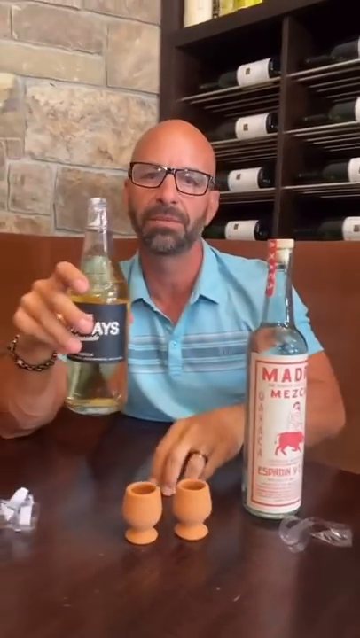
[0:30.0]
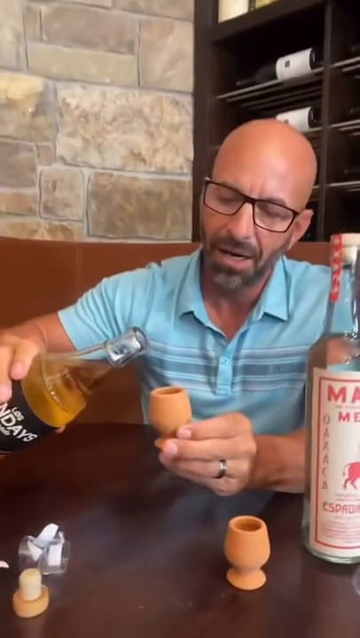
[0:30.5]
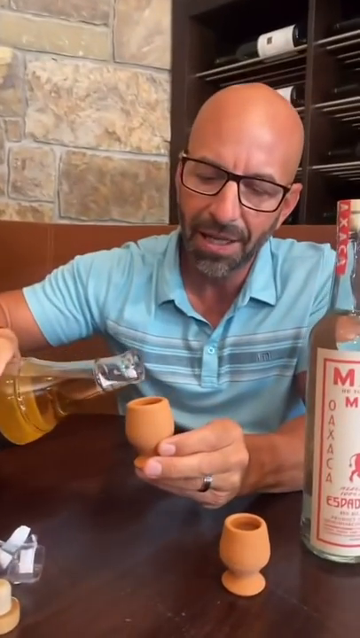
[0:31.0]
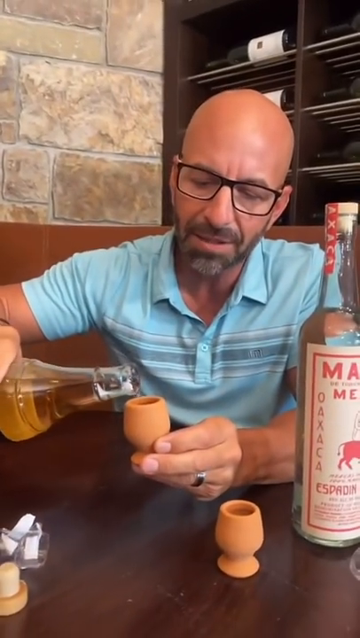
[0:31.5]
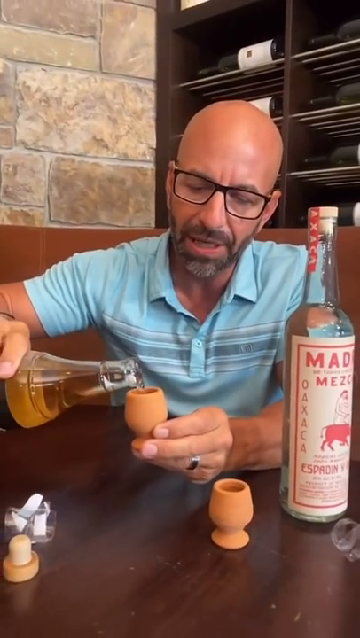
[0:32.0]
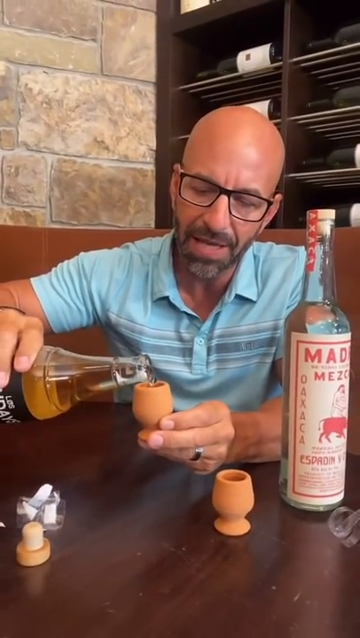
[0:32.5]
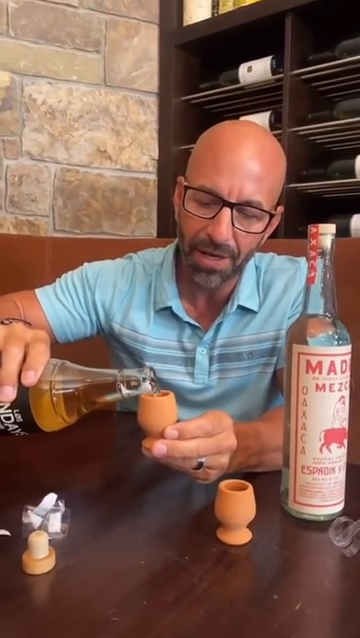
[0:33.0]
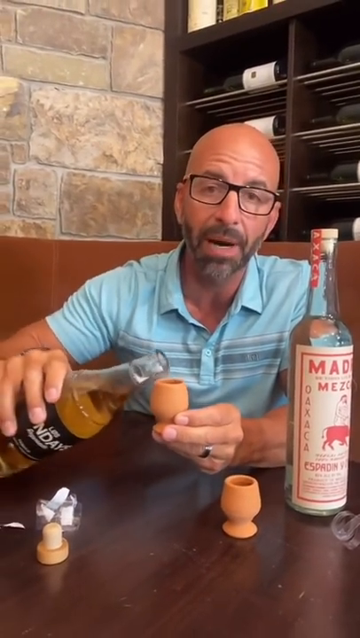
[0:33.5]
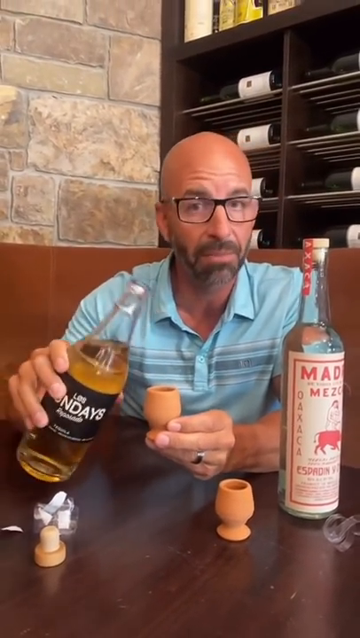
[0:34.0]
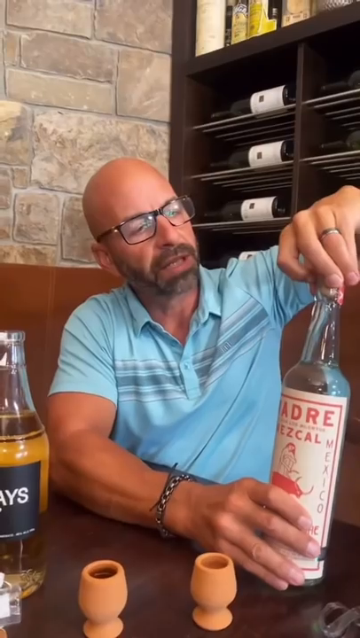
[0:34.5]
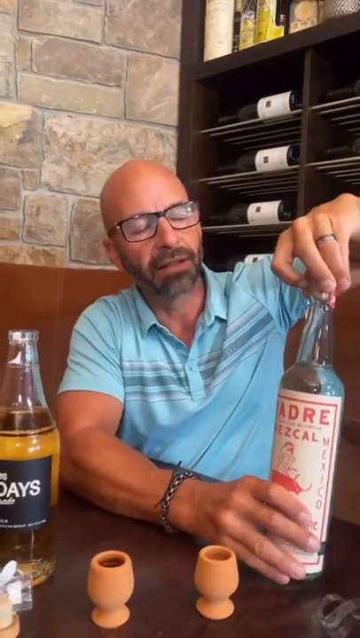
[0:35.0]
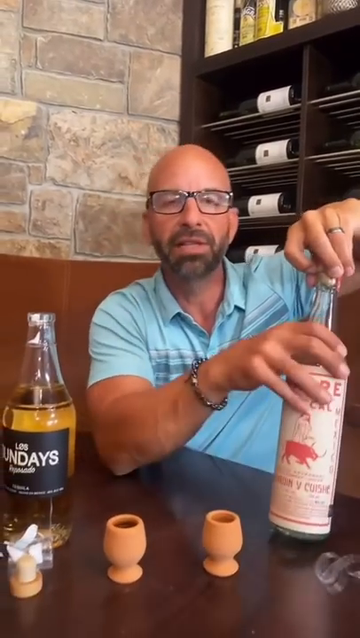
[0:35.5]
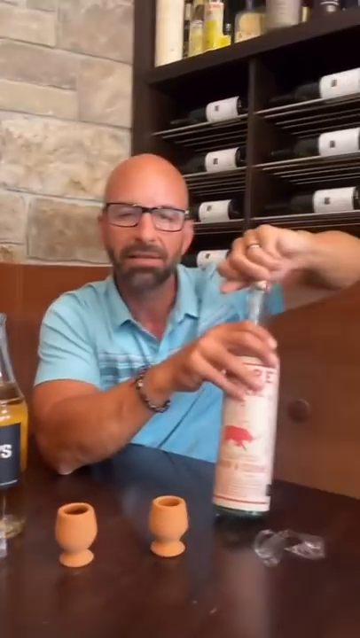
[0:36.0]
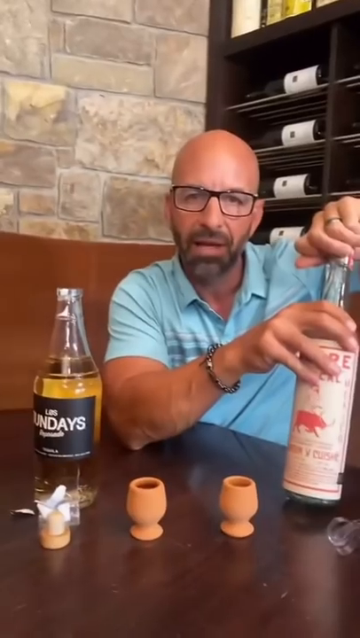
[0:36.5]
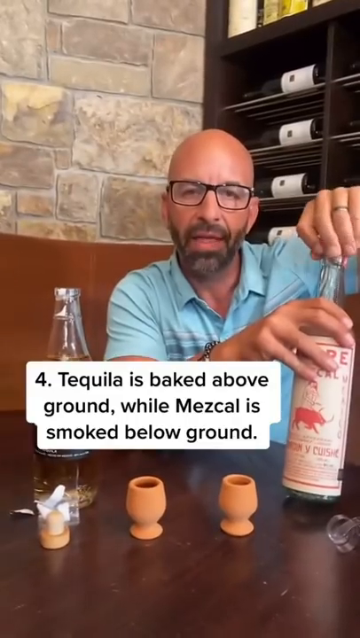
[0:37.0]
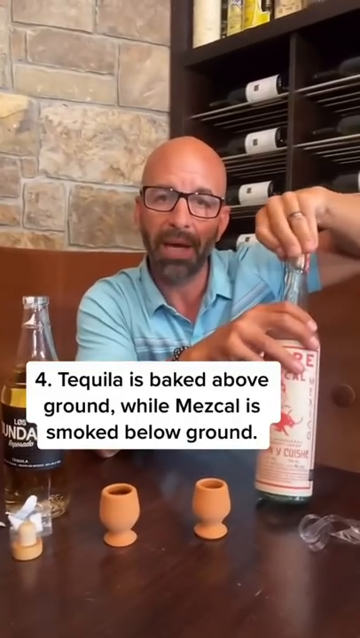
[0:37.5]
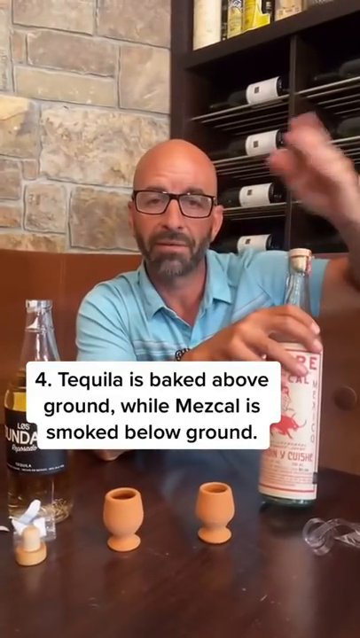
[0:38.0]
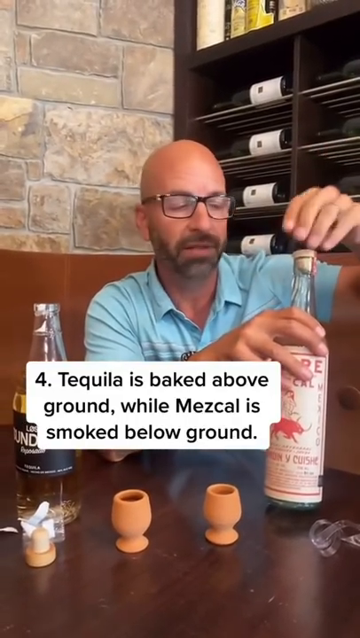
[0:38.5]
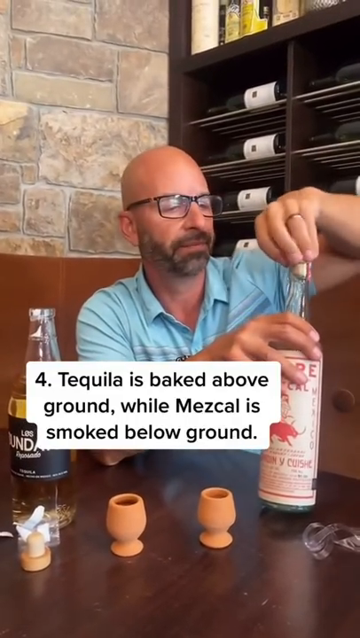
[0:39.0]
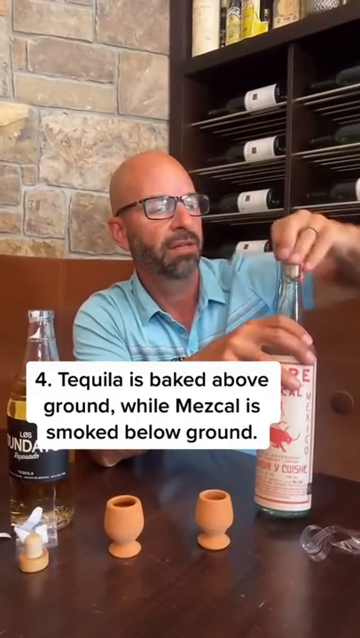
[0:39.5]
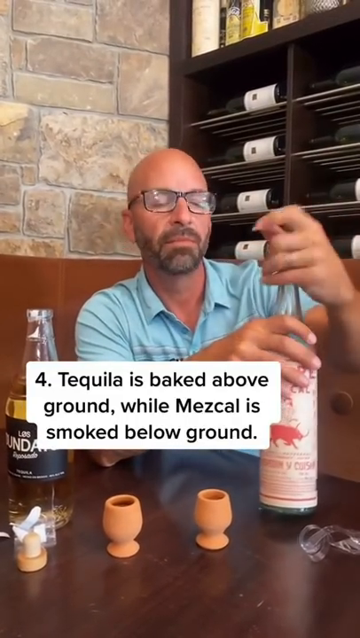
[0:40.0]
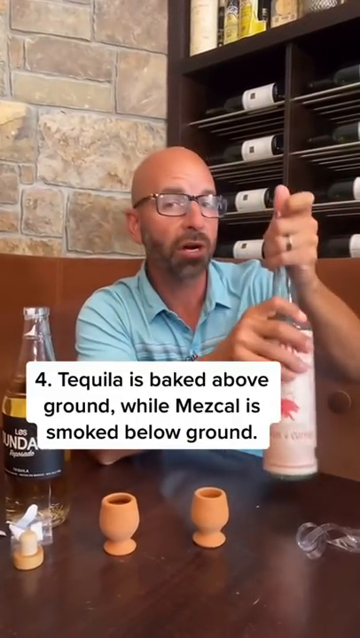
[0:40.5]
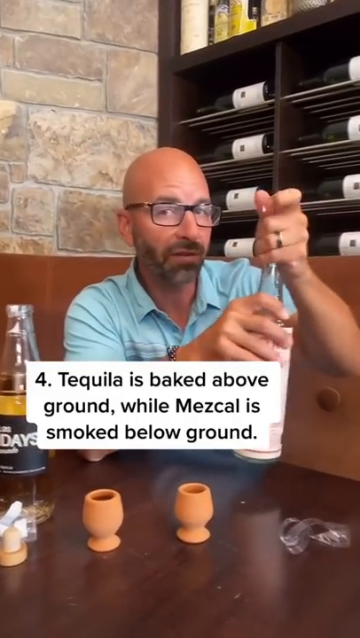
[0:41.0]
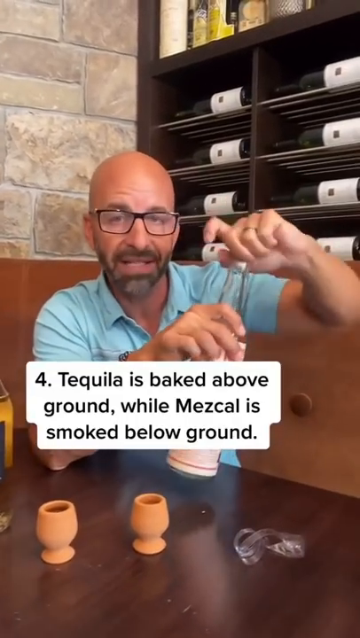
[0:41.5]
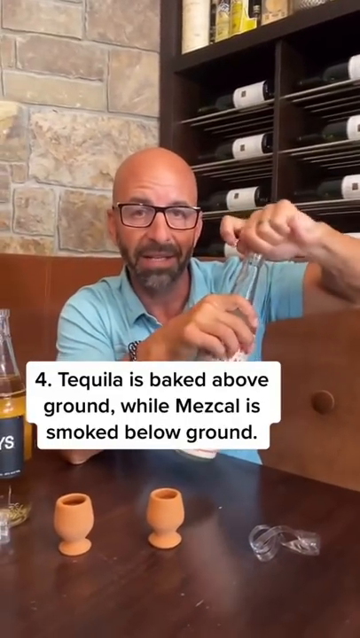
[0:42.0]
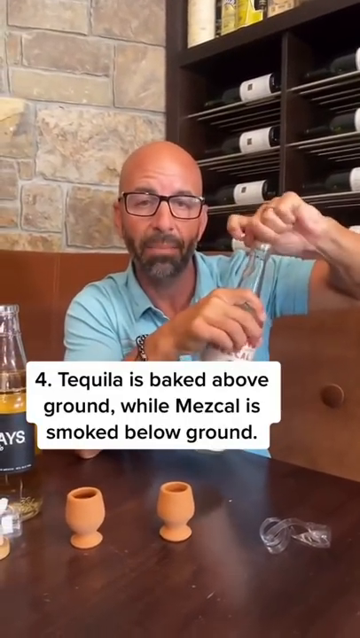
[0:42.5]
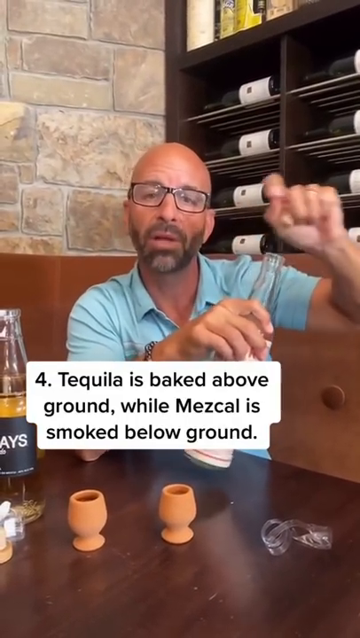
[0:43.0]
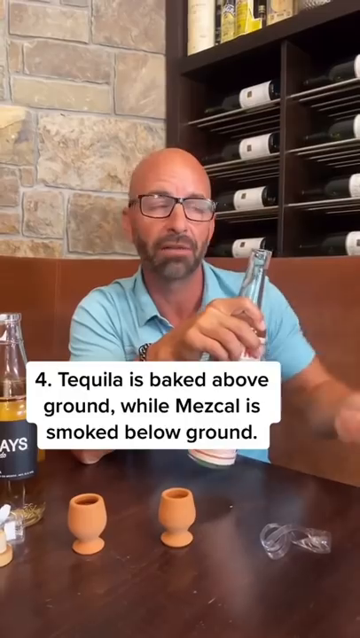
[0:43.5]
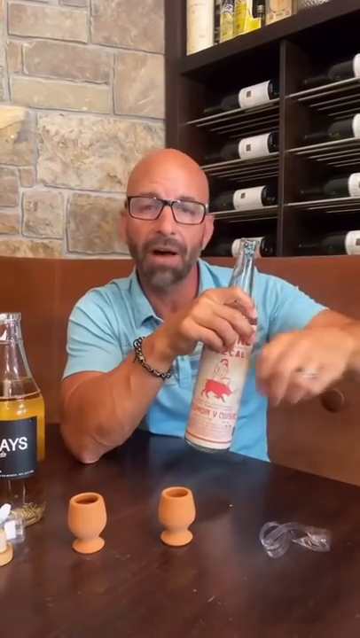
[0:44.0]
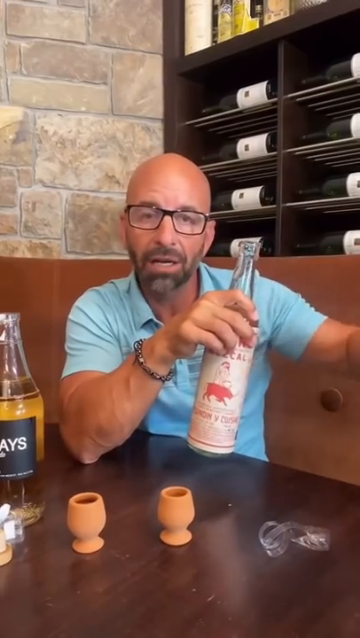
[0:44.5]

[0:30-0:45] The bald man in blue with black glasses and a beard sits at the corner booth of a bar, with wine bottles behind him. In front of him, a bottle of mezcal, a bottle of tequila and two clay shot glasses are on a brown table. He appears to be pouring the tequila into one of the shot glasses while talking to the camera. Next he takes the lid off the mezcal, and he says that tequila is baked above ground while mezcal is smoked below ground. He struggles to take the cork off the bottle of mezcal while talking to the camera. He wears a wedding band that is maybe silver, and a large chain is halfway up his forearm.